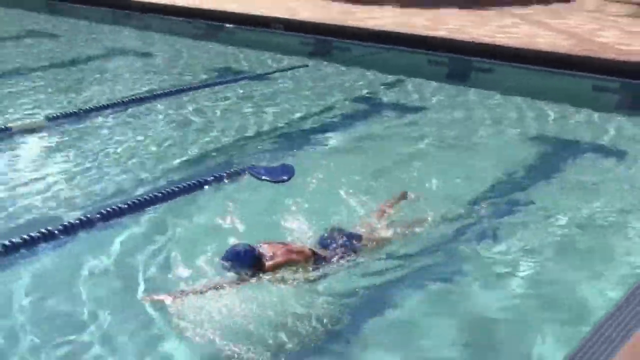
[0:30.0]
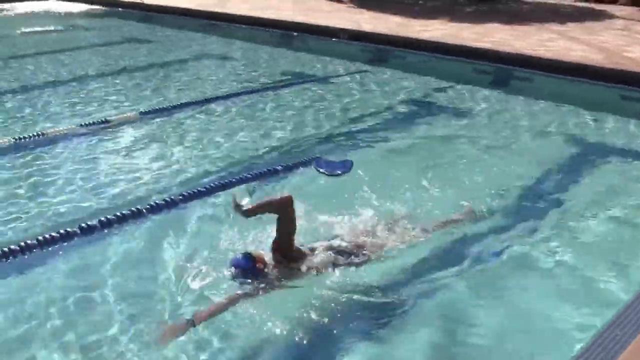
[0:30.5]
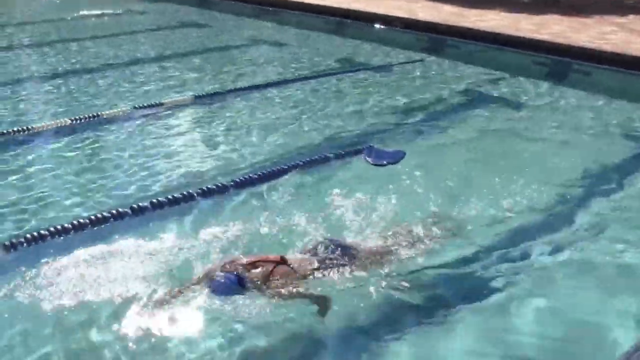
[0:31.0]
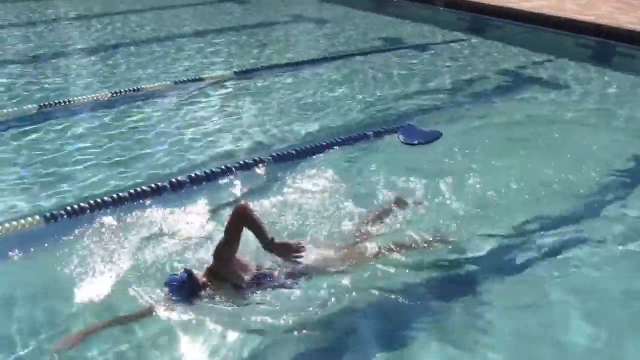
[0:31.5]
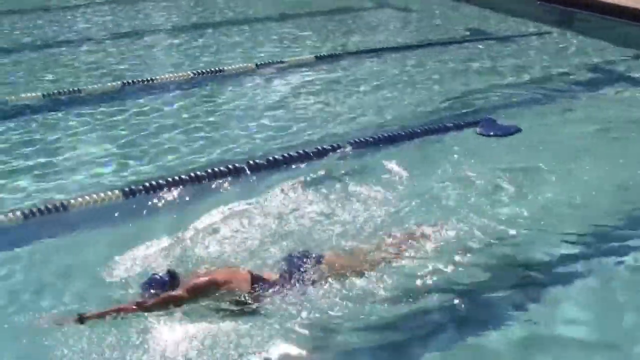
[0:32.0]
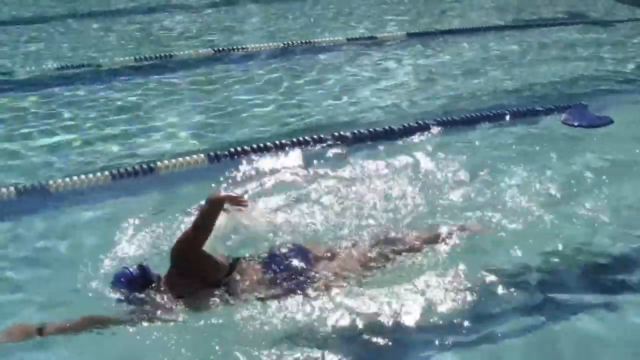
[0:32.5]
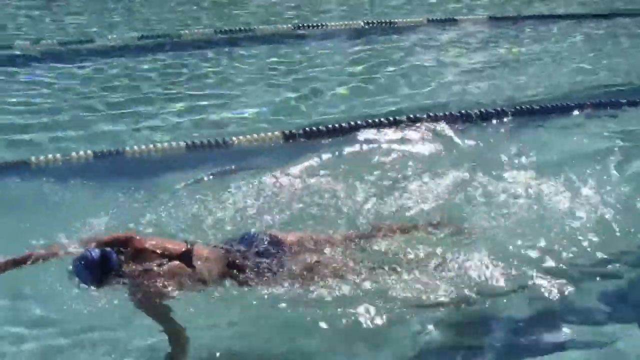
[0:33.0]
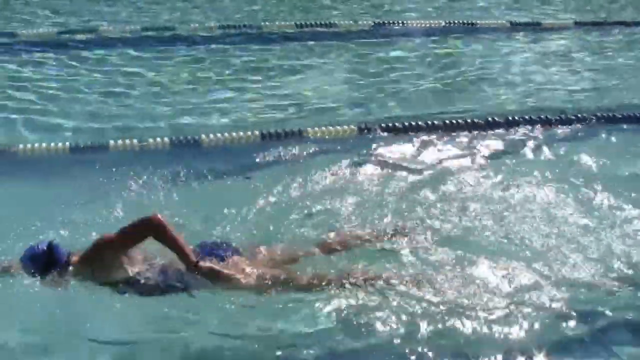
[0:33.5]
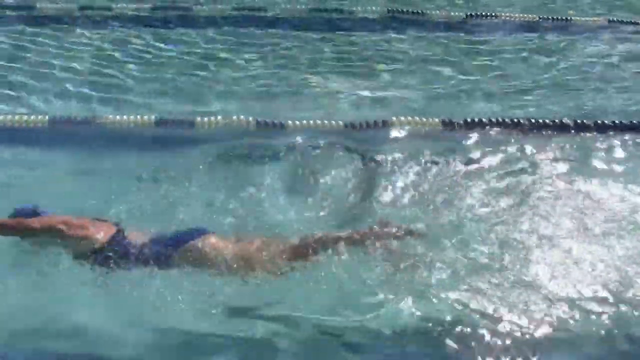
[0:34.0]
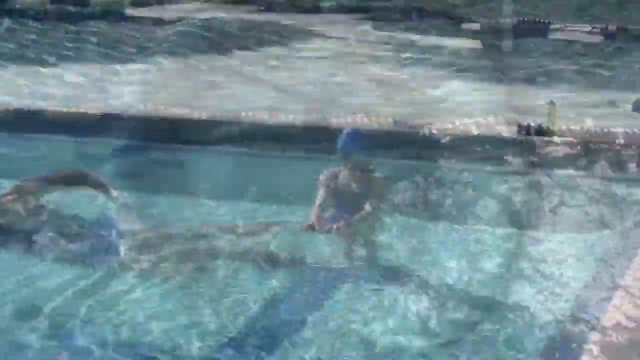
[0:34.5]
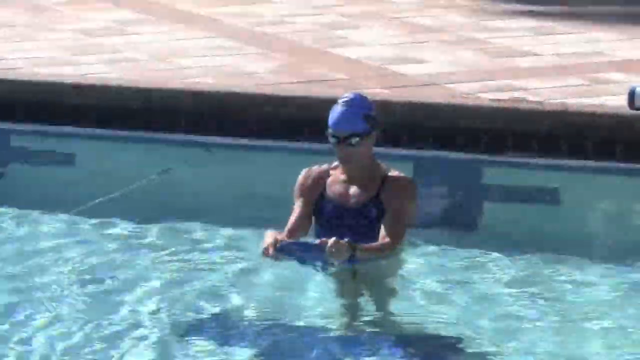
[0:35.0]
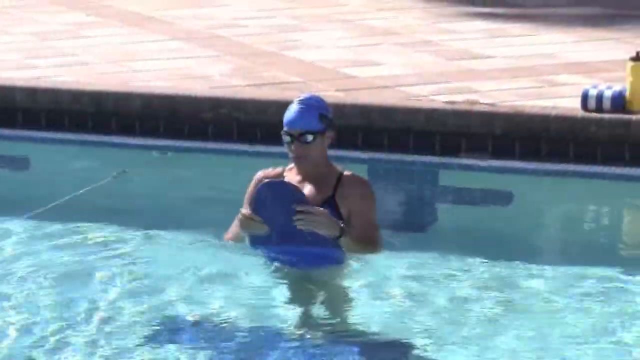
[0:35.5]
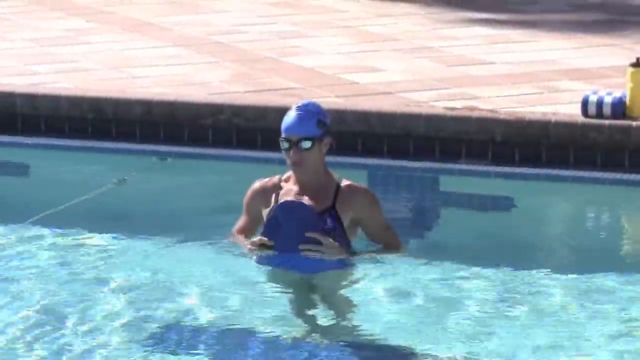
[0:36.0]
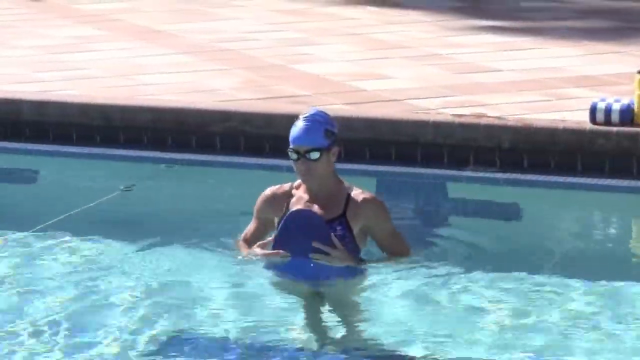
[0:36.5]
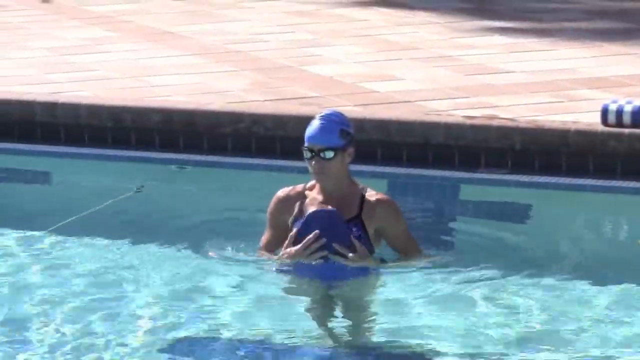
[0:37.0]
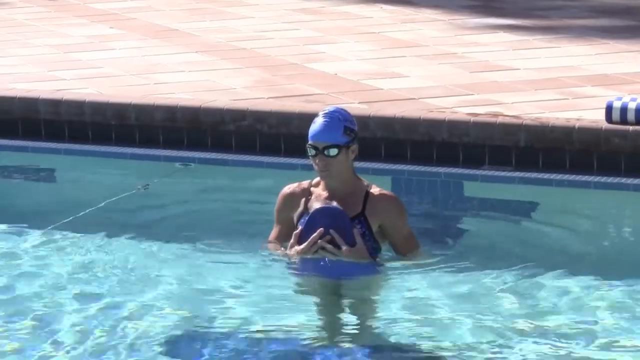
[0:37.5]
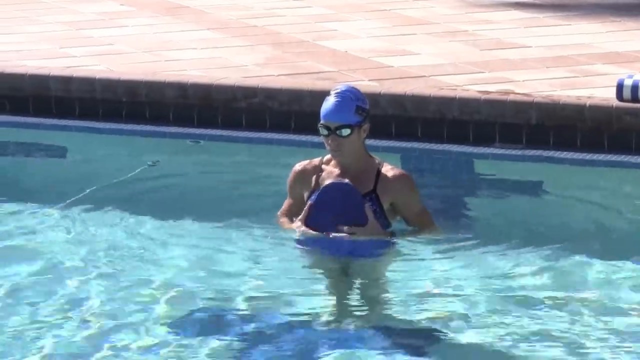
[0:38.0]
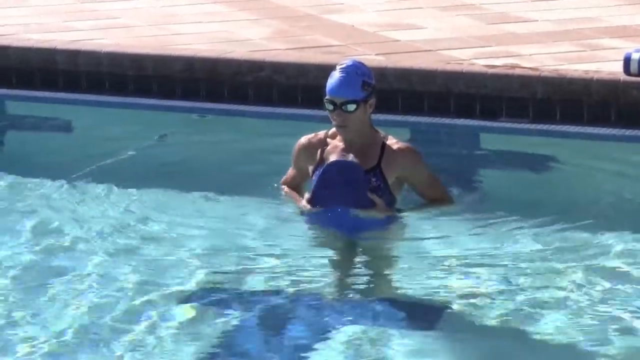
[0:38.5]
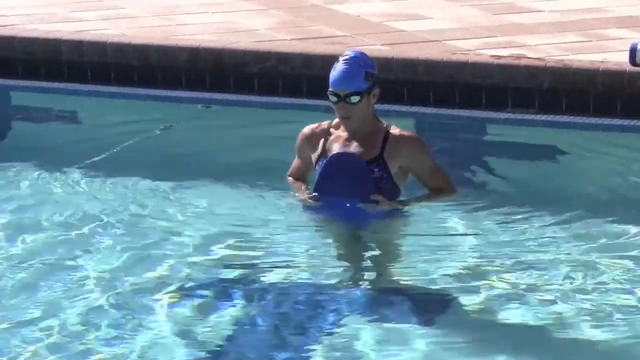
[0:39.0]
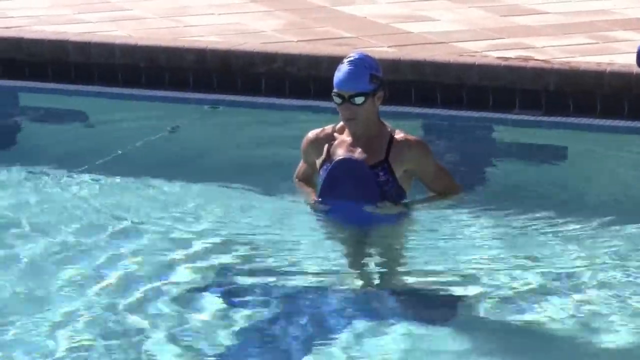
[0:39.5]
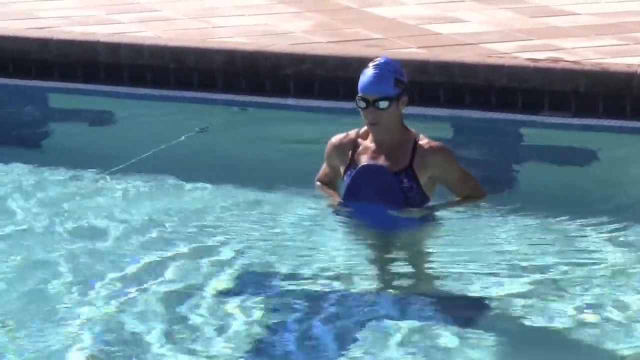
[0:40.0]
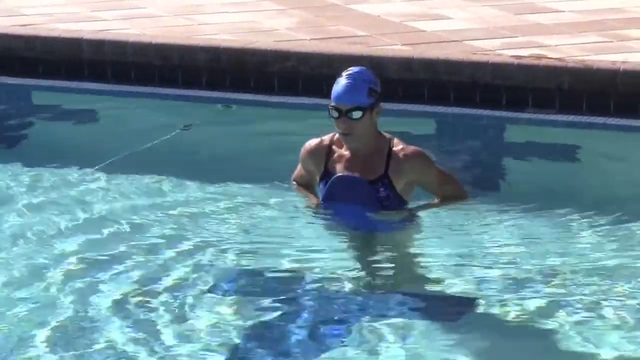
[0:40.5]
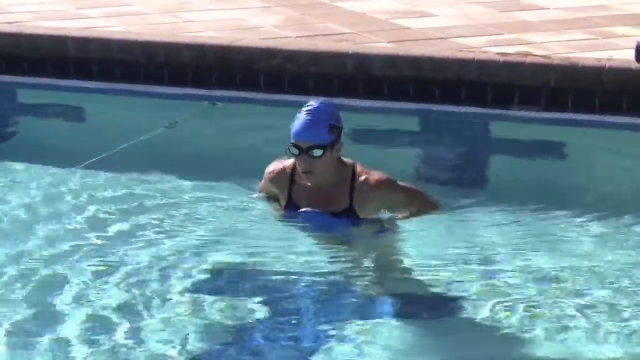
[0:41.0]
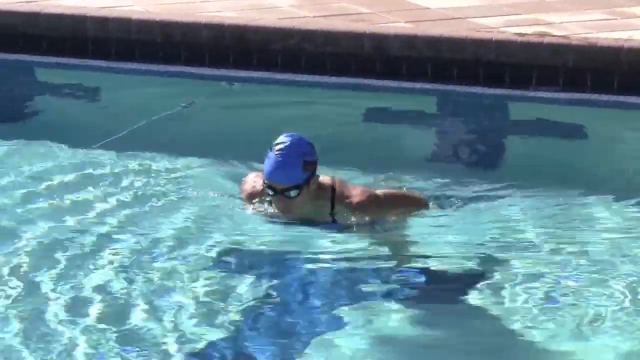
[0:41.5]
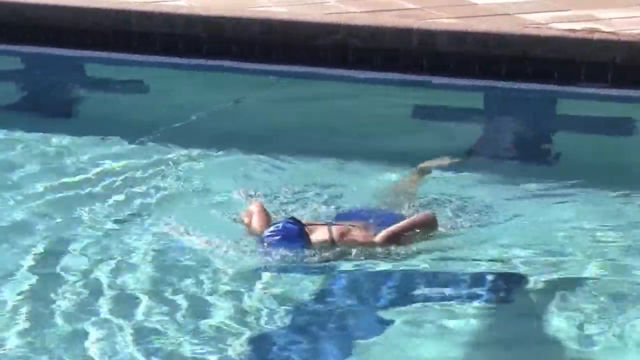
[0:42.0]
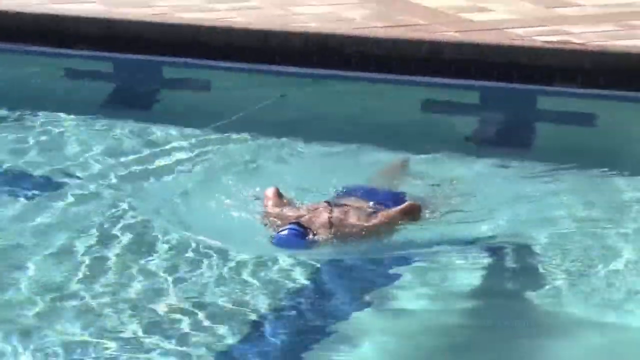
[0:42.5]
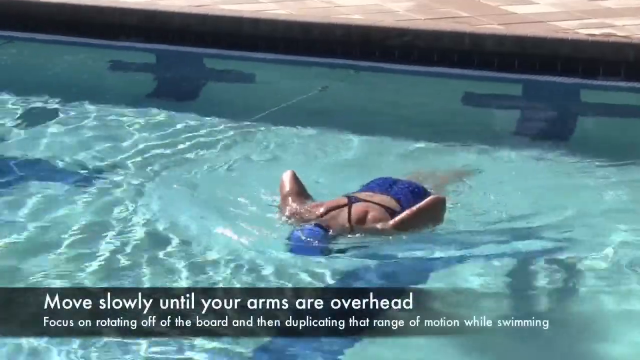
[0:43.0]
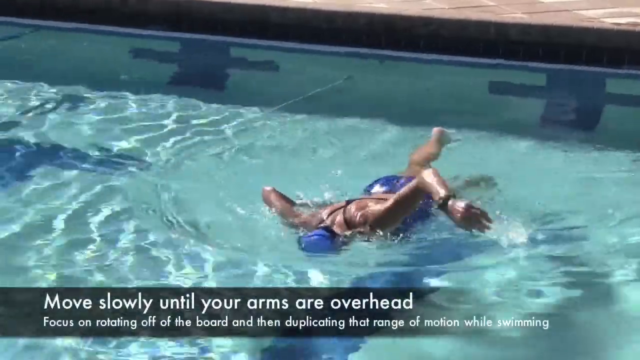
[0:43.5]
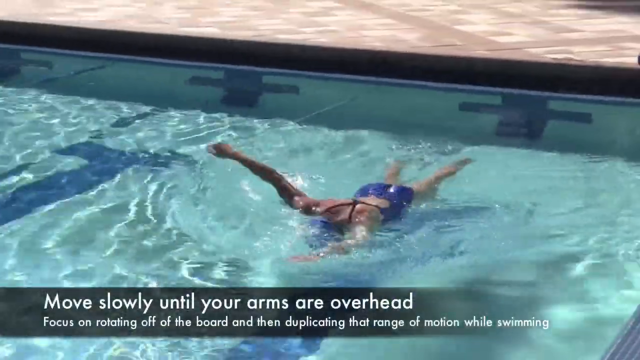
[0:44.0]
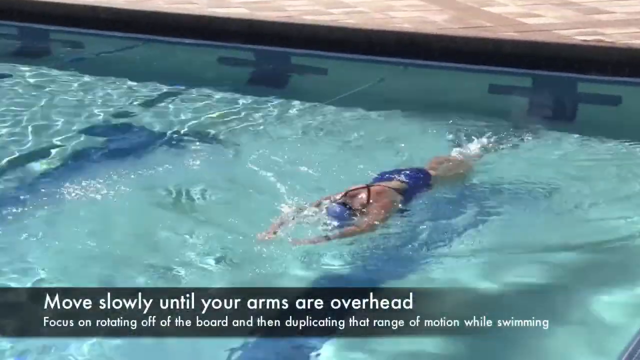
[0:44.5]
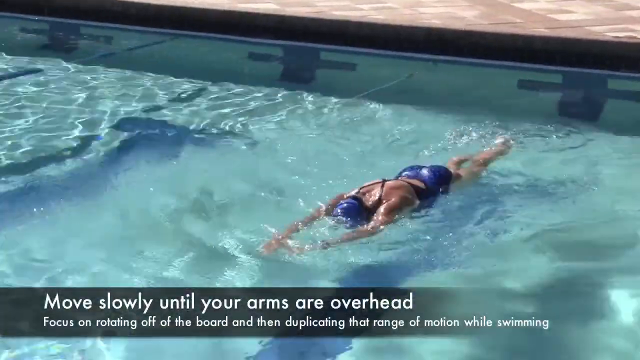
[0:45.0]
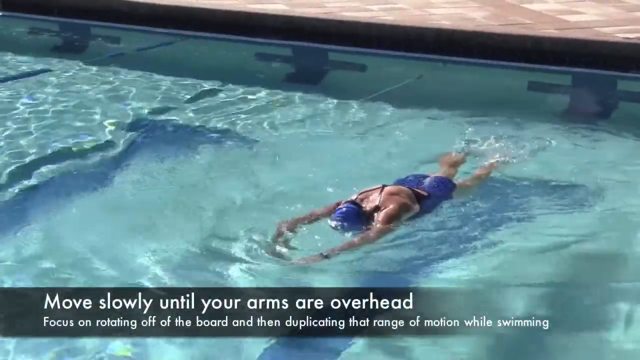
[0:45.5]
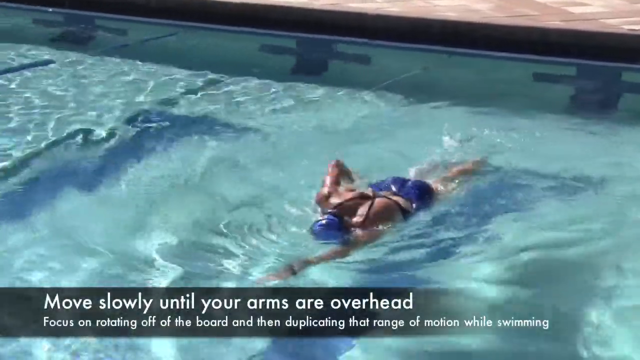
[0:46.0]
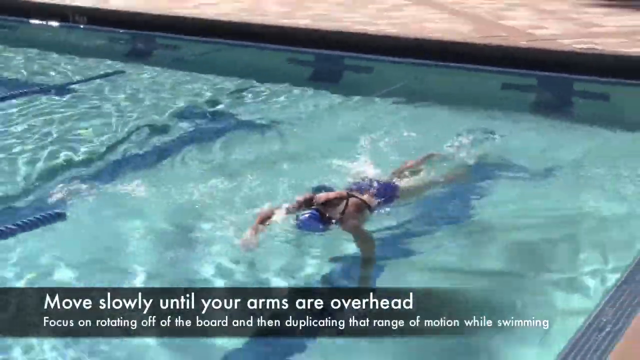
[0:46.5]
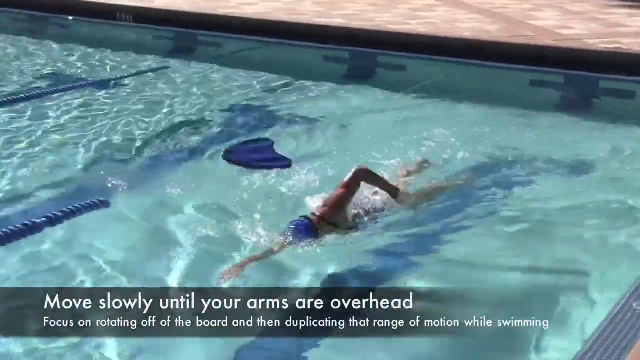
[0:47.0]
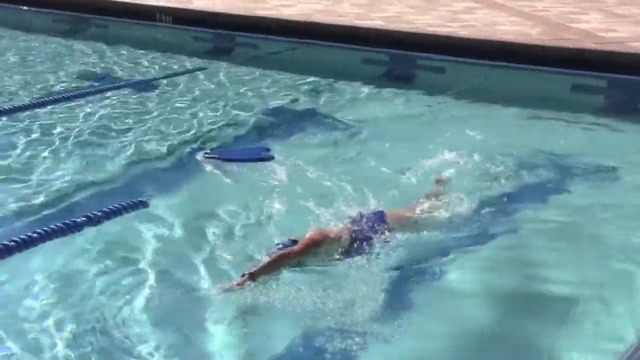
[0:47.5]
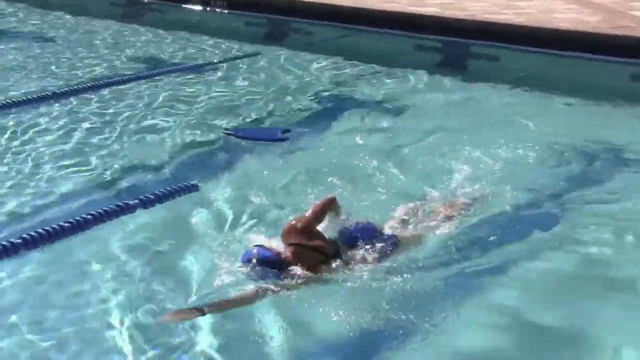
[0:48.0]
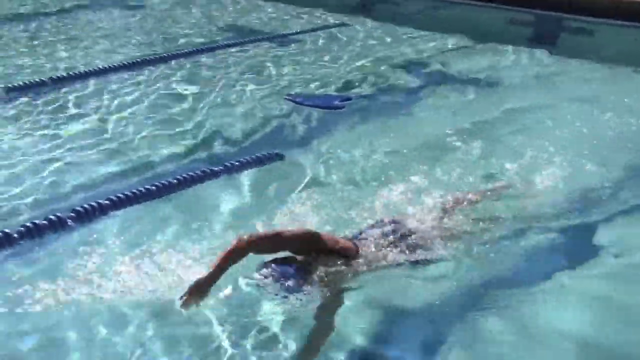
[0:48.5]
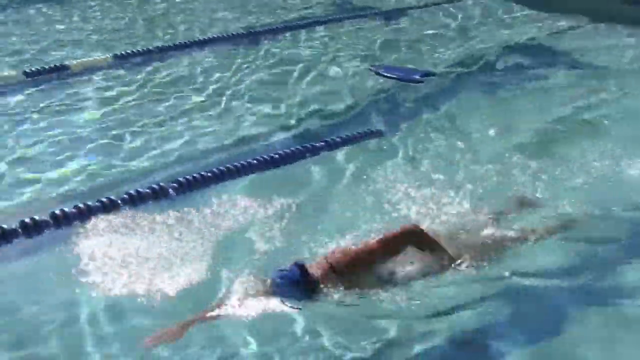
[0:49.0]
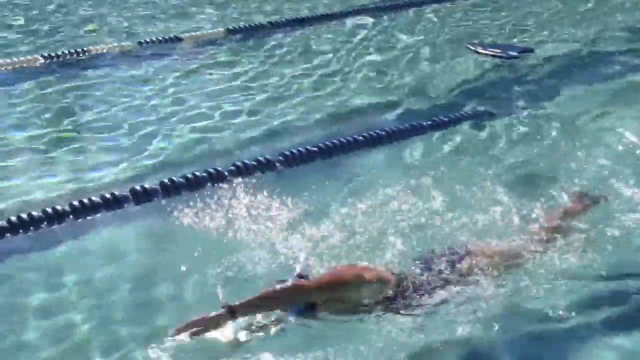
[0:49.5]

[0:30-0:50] In the swimming pool, the person again tries to balance with the balancing kit, a pad that helps with balance. Text reads "move slowly". The balancing kit is then thrown back and the person is back to swimming.